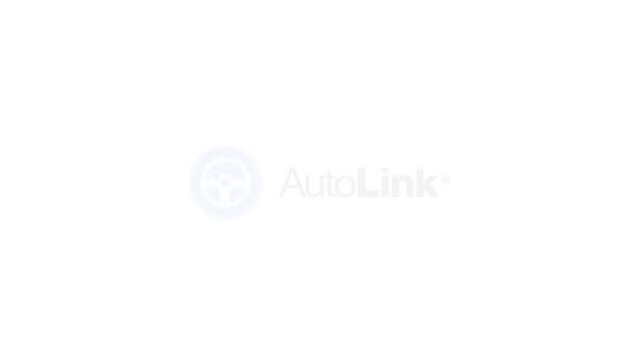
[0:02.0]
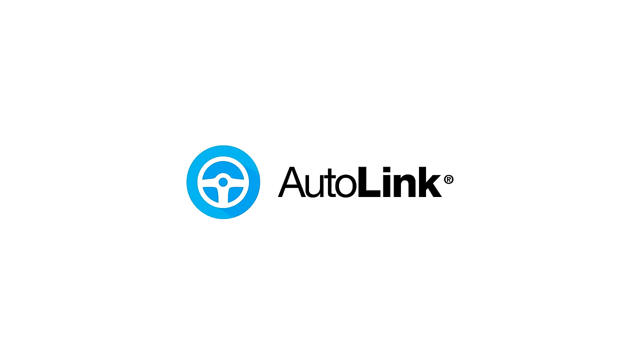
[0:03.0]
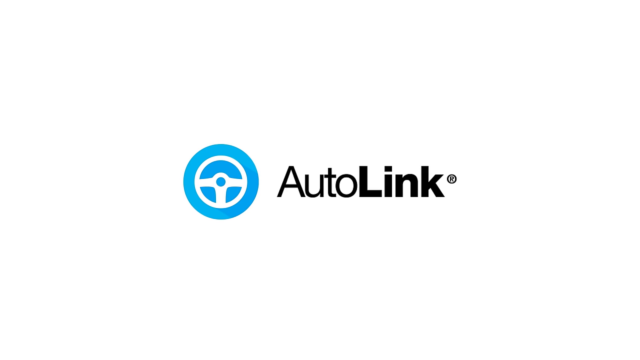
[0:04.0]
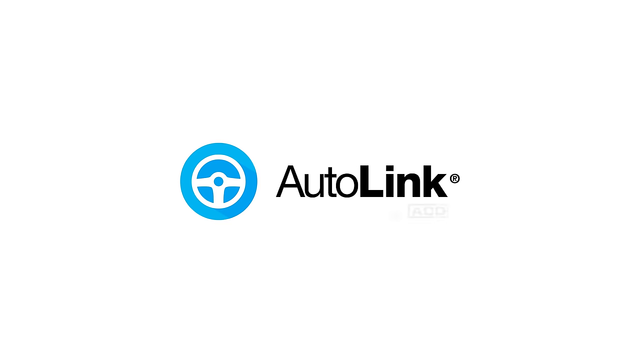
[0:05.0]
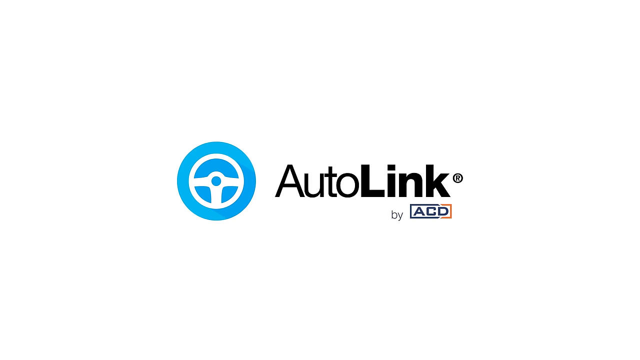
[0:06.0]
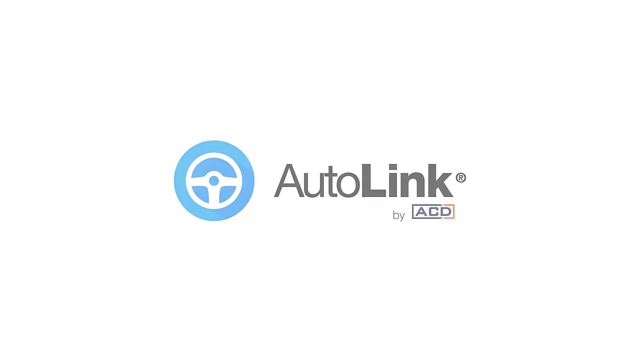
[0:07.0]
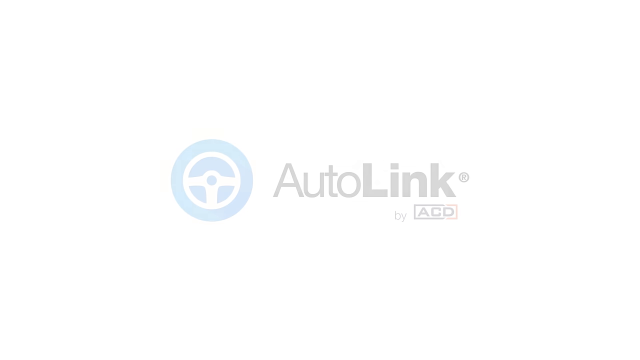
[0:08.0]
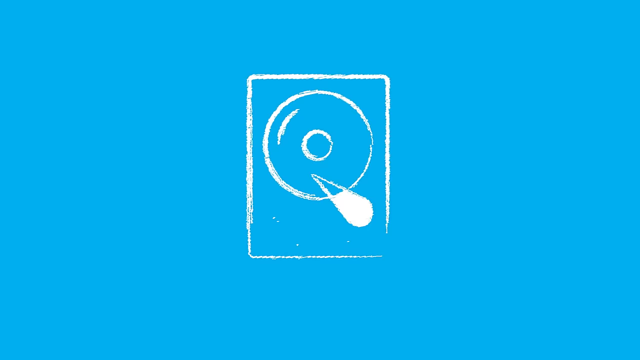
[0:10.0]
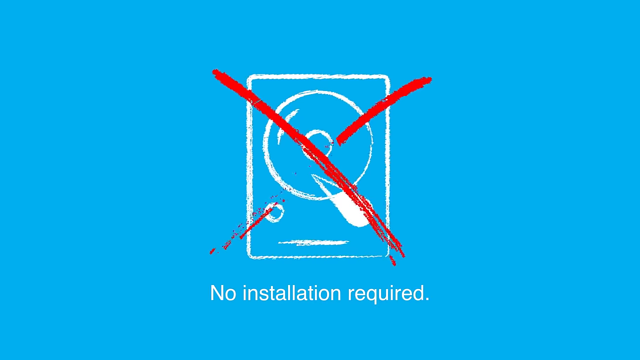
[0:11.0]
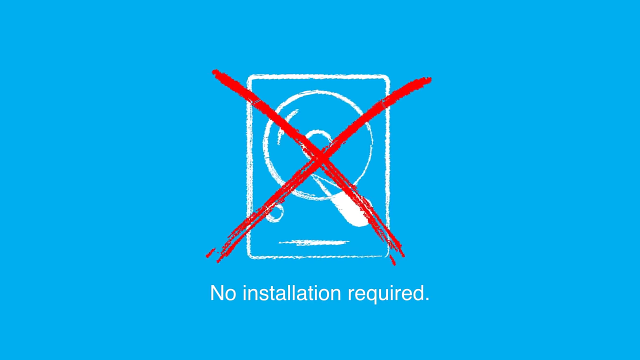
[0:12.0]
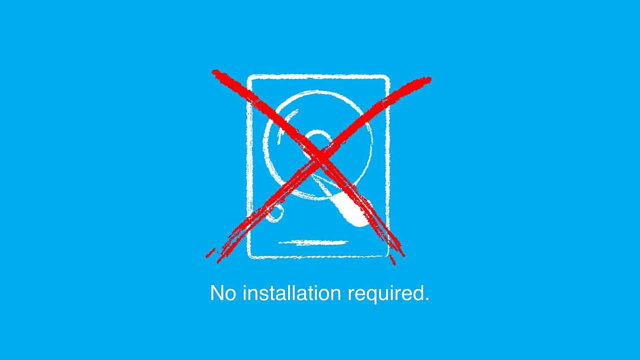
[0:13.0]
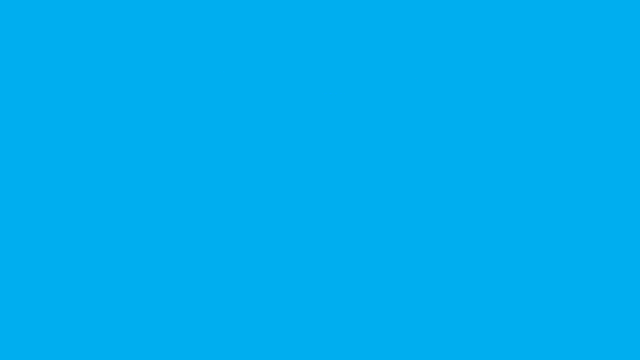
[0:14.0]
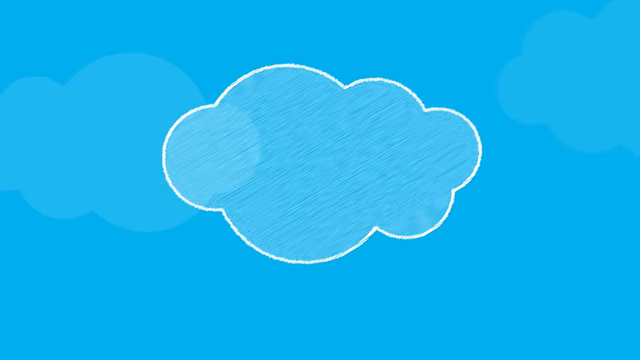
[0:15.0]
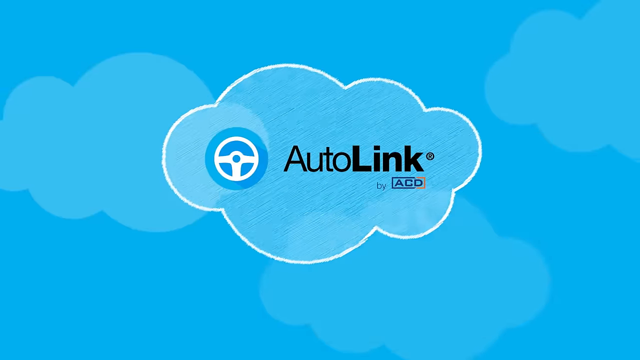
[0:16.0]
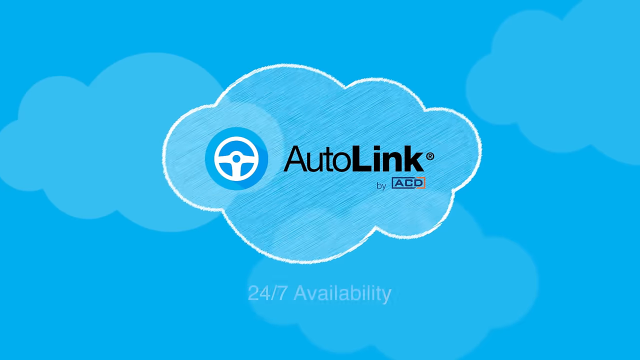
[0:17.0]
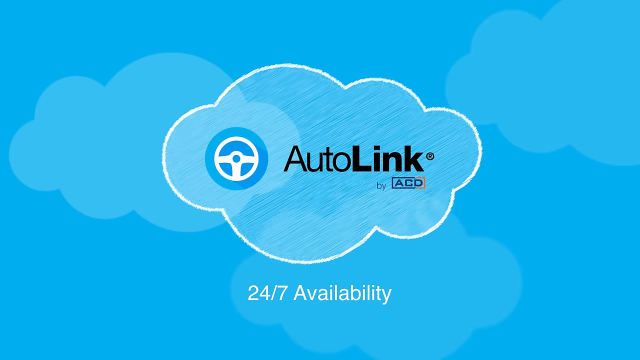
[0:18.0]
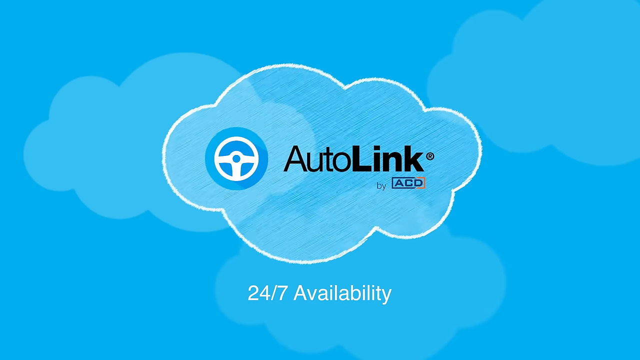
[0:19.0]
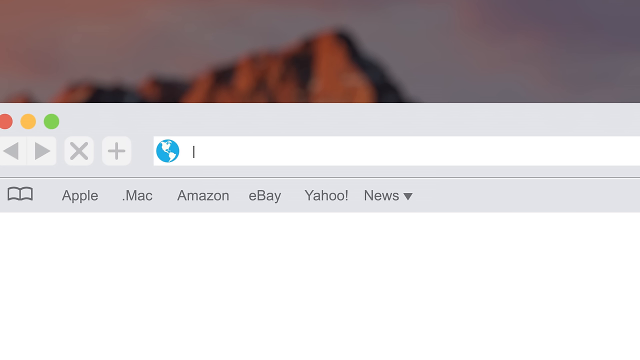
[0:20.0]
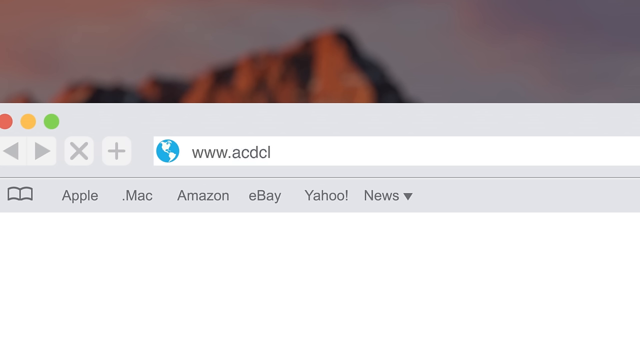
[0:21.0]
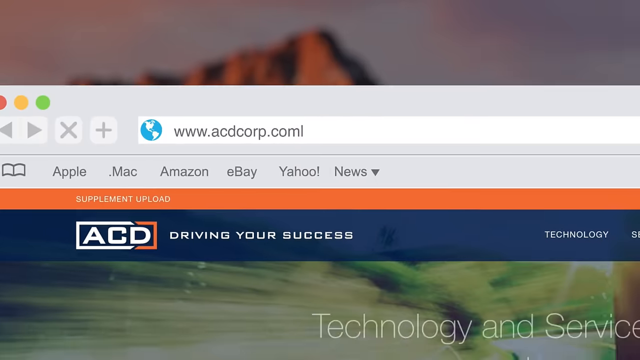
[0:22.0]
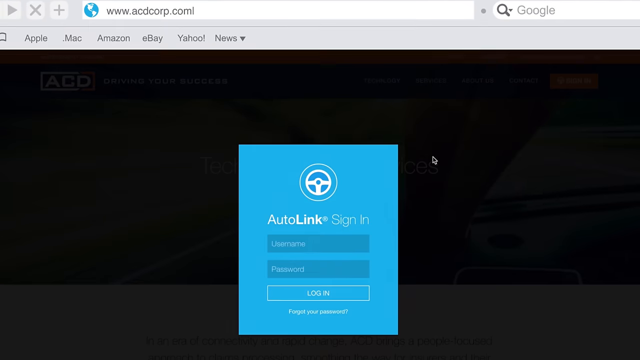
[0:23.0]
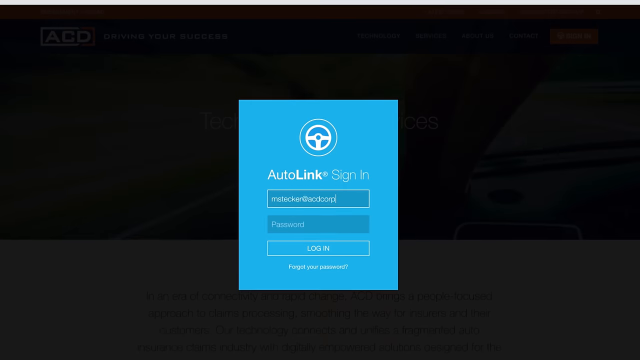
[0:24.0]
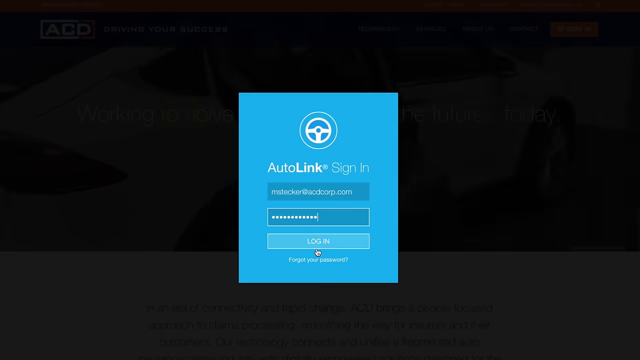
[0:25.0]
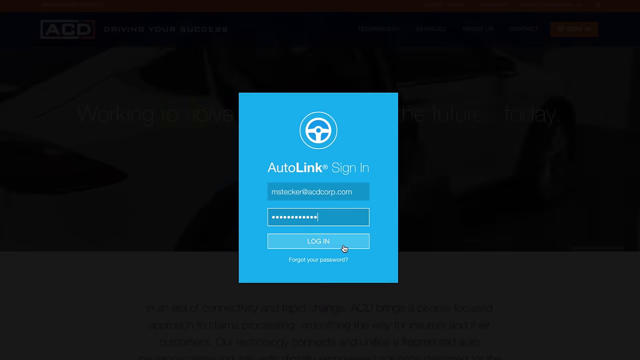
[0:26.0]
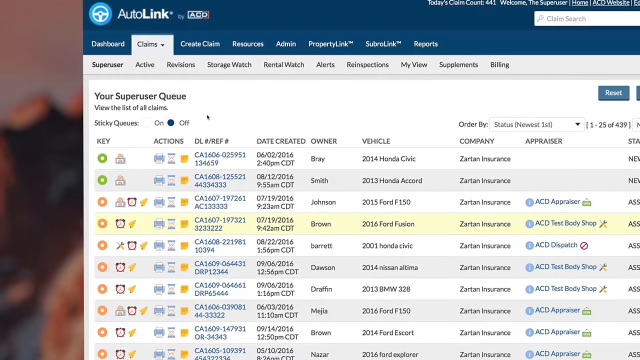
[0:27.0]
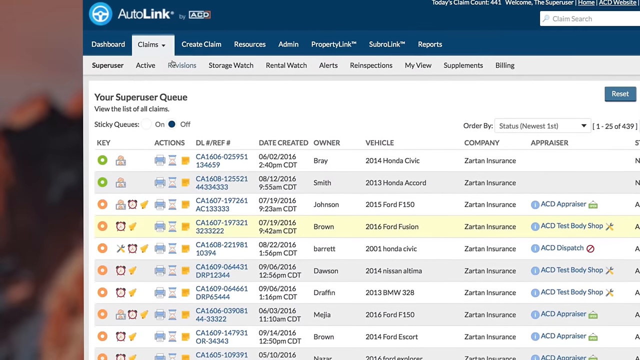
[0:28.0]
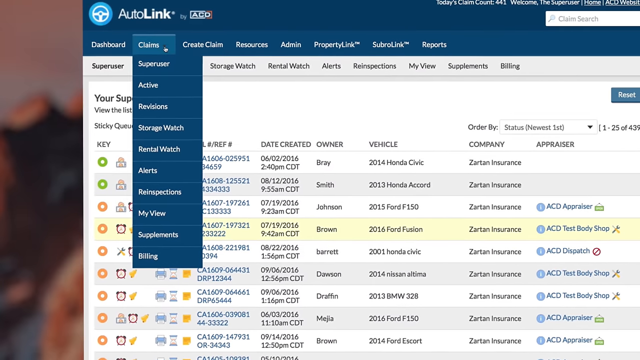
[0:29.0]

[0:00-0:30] The video opens on a white screen. The word "AutoLink" fades into the centre of the screen. There is a logo, a blue circle with a white steering wheel superimposed on top of it, and the word "AutoLink" in Arial appears to its right, with "Auto" in standard Arial and "Link" in Arial Bold. A caption, "by ACD", then appears just beneath it, outlined in blue and orange in a rectangle: blue outlines the A and the C, and the orange rectangle outlines the letter D. This fades away to white, and then blue fades in. What looks like a chalk drawing of the internal workings of a hard drive appears on the blue background, with the caption "no installation required" in white text underneath, and then a red cross is drawn over the picture of the hard drive. A diagonal wipe follows, revealing what looks like a chalk picture of a cloud: just an outline drawing in a thick white outline and a thinner grey translucent outline. The word "AutoLink" and the caption appear again in the middle of the cloud.